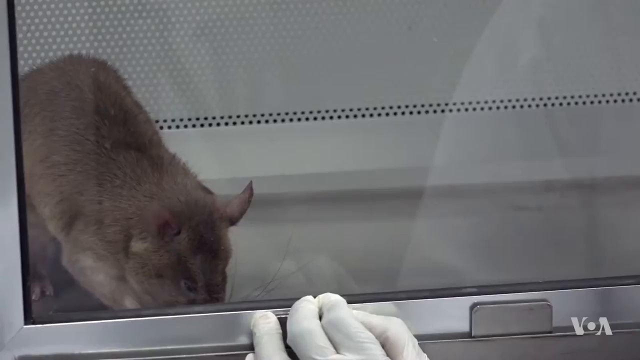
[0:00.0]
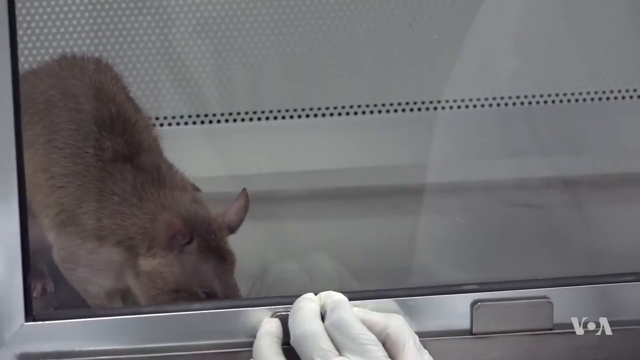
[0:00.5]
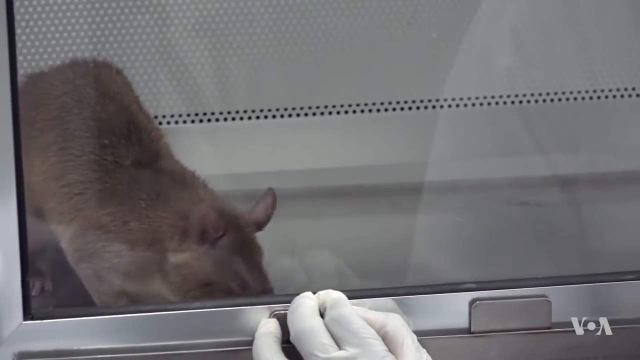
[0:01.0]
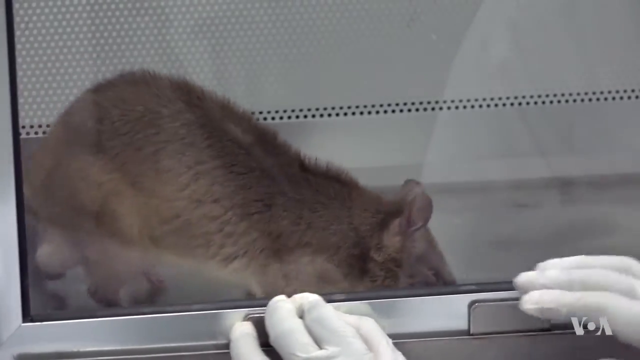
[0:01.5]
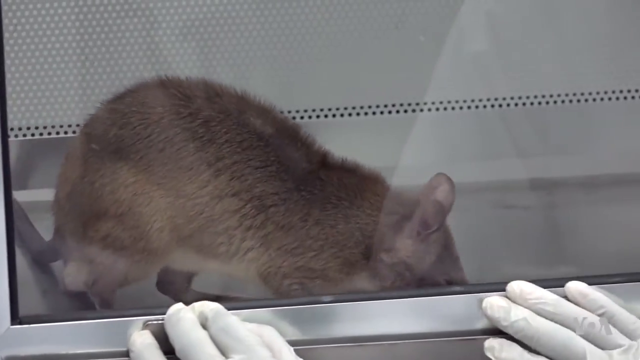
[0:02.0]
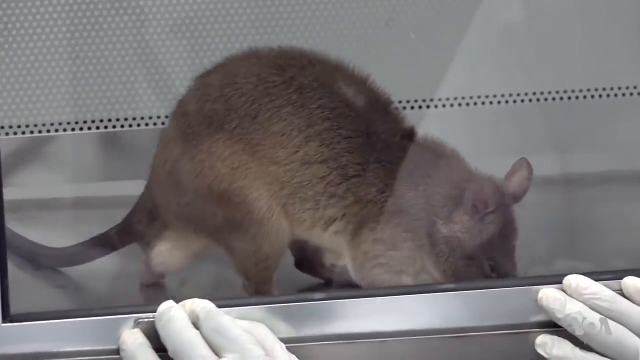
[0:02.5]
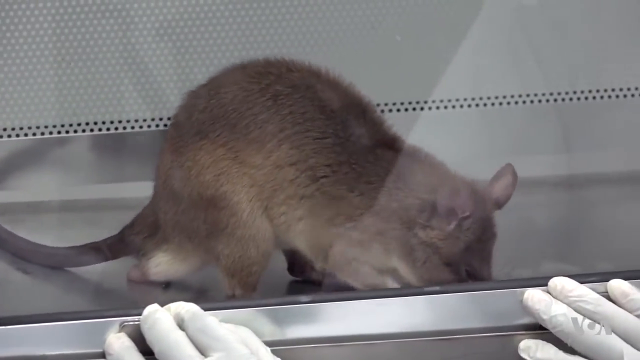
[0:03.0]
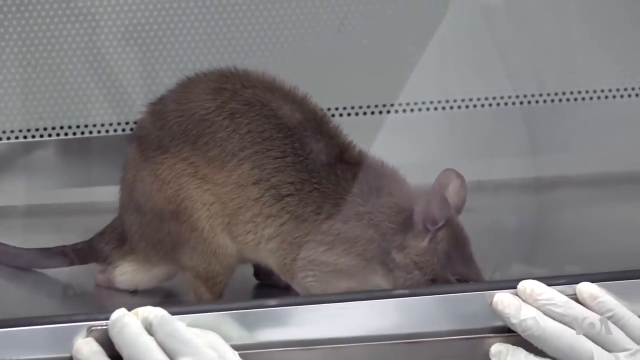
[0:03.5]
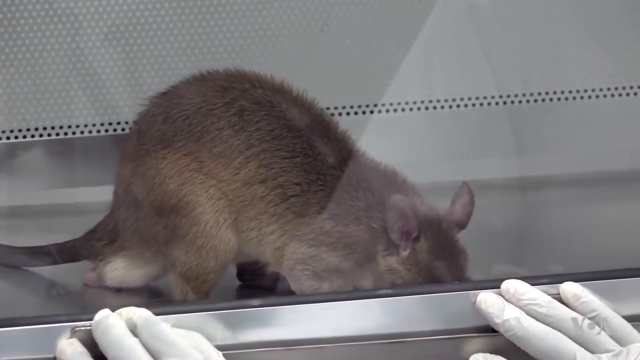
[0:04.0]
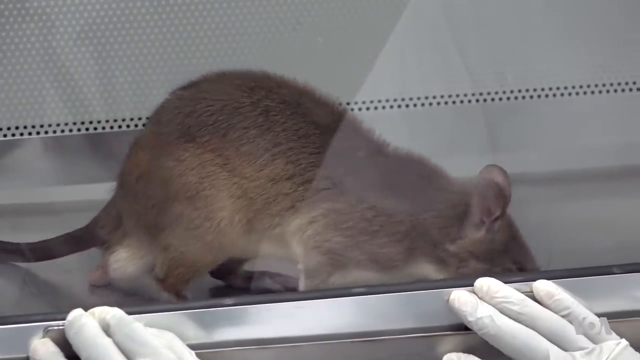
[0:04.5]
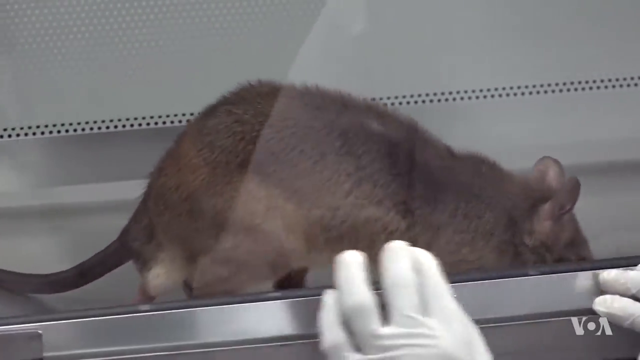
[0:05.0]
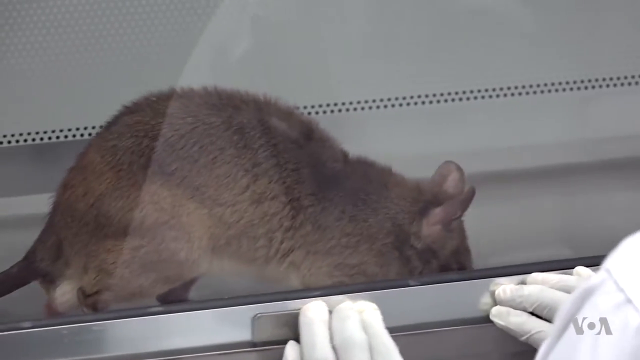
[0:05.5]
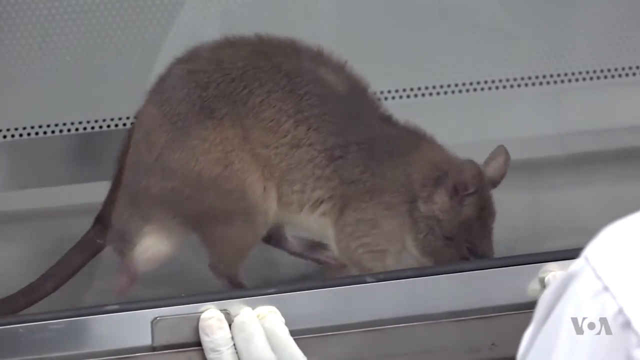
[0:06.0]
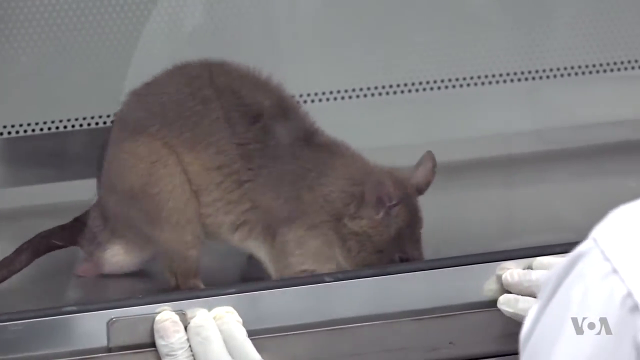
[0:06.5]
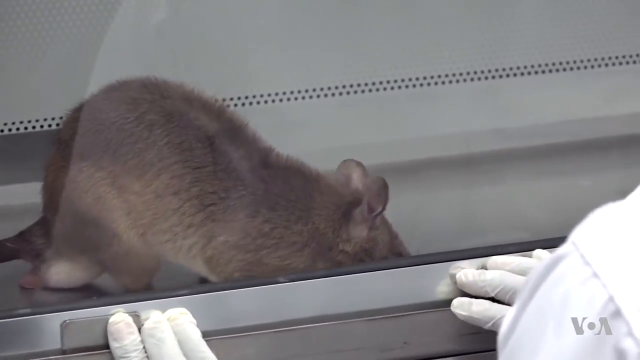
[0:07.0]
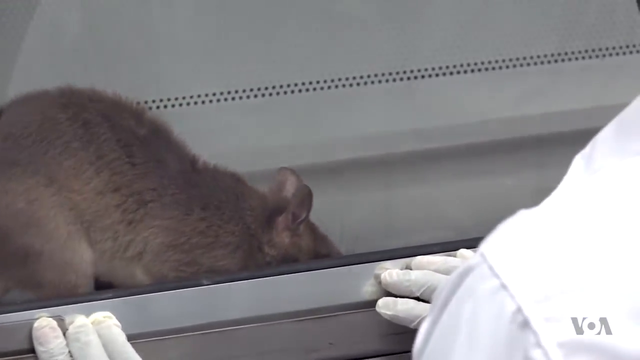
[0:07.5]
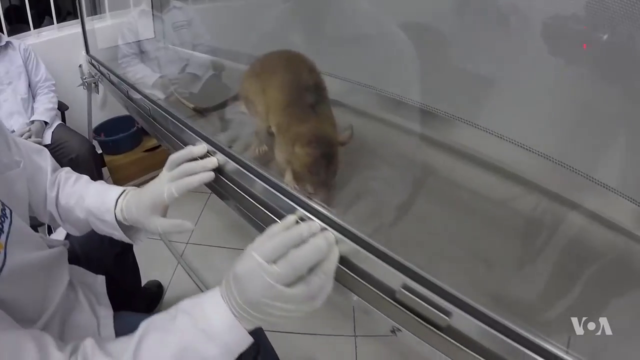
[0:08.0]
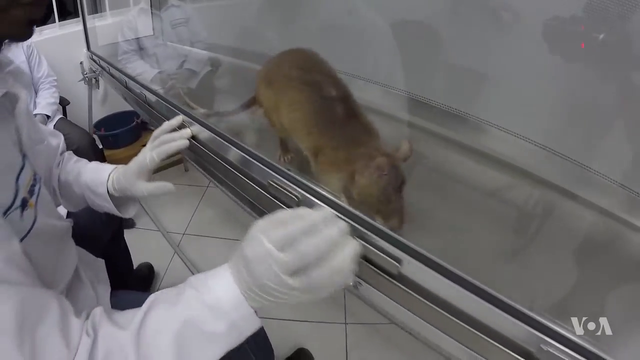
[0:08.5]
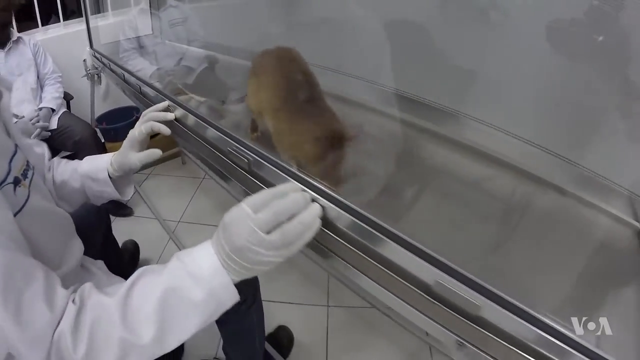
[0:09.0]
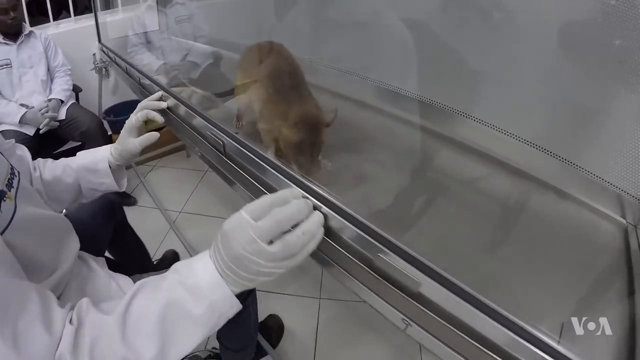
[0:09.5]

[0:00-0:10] A gray mouse with black eyes and a grayish tail walks around in a cage. It is possibly eating, and it looks like it is trying to get out. Scientists follow it around as the mouse seems to look for an opening to dig out. It constantly digs around looking for a way out, and the whole container is metallic.